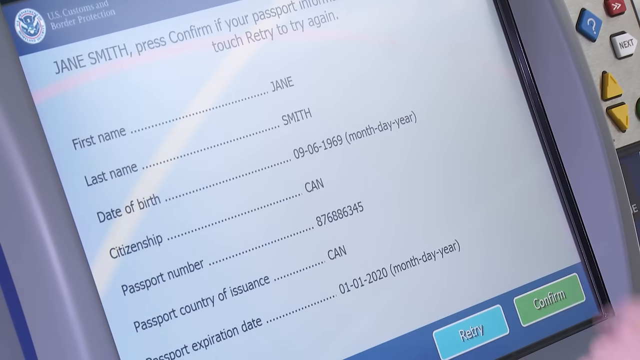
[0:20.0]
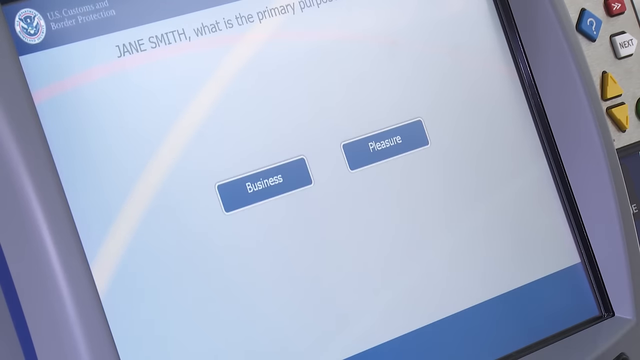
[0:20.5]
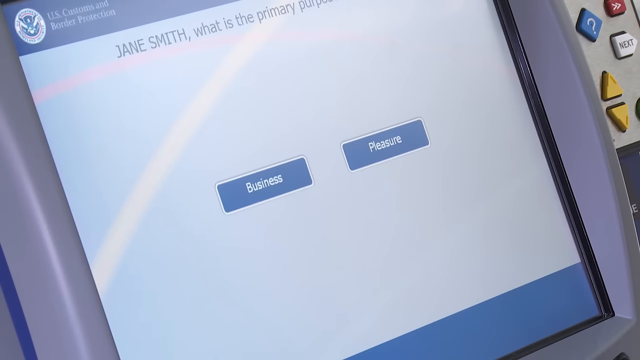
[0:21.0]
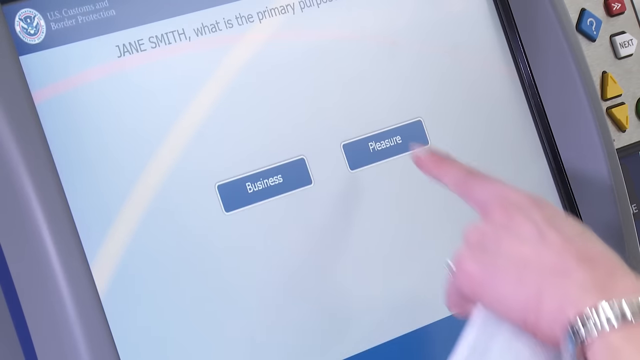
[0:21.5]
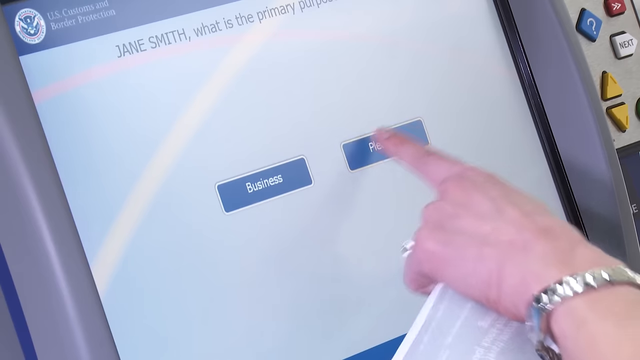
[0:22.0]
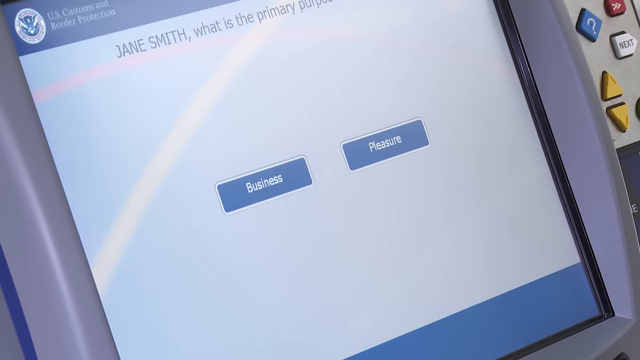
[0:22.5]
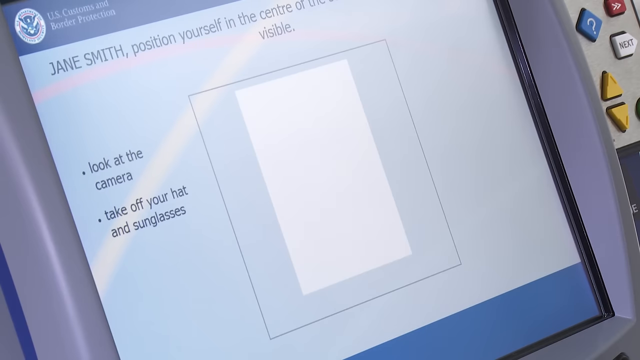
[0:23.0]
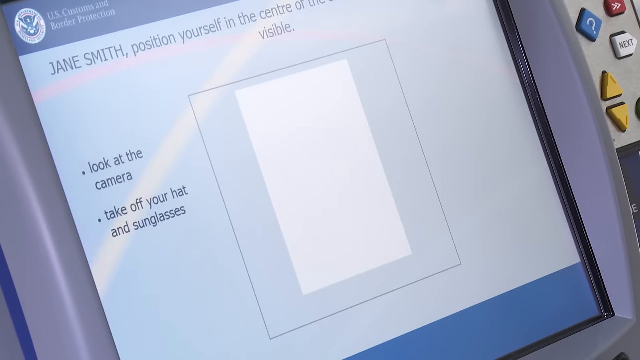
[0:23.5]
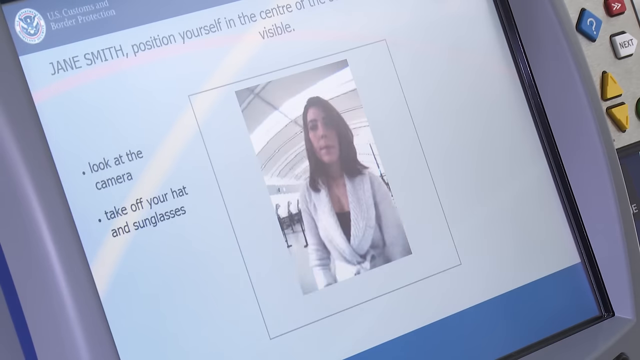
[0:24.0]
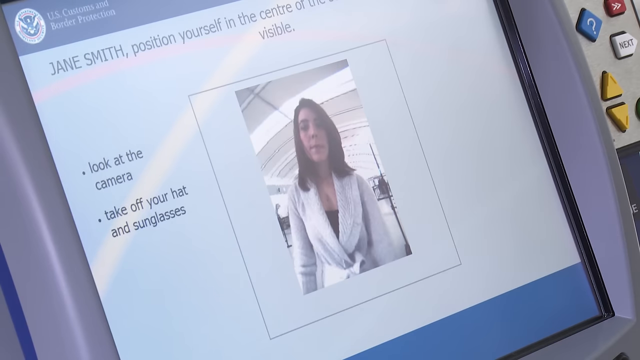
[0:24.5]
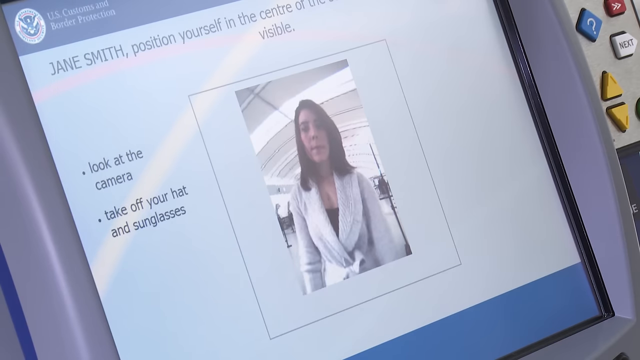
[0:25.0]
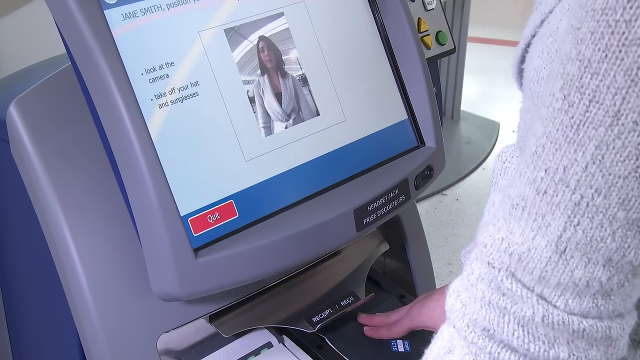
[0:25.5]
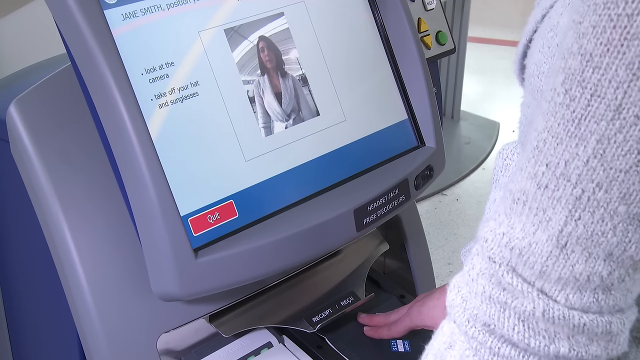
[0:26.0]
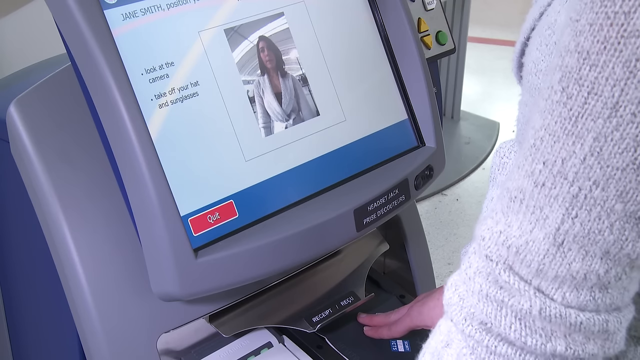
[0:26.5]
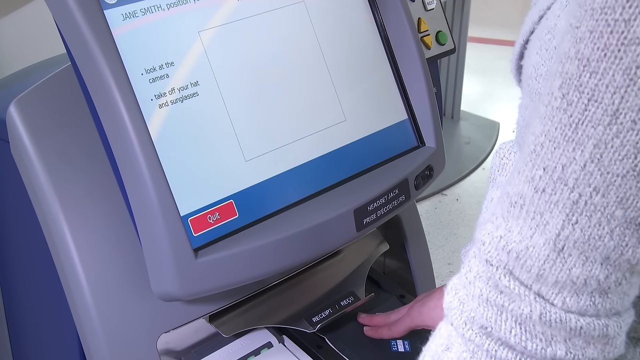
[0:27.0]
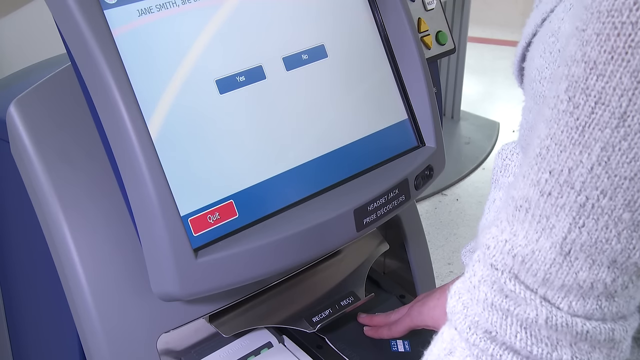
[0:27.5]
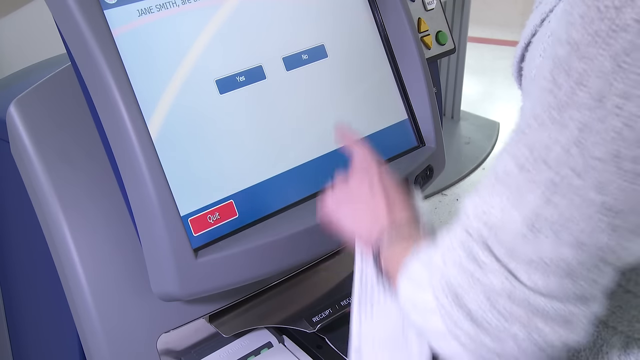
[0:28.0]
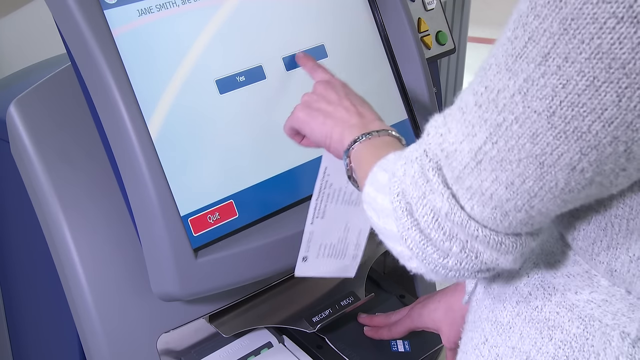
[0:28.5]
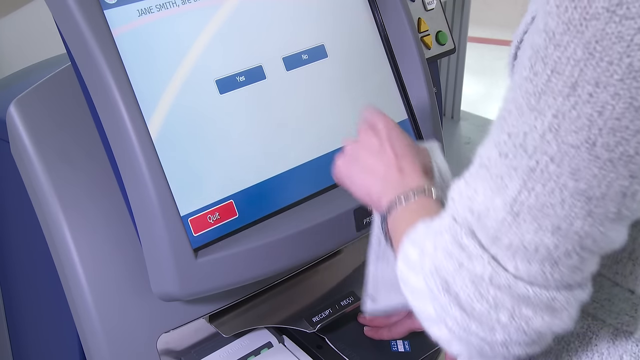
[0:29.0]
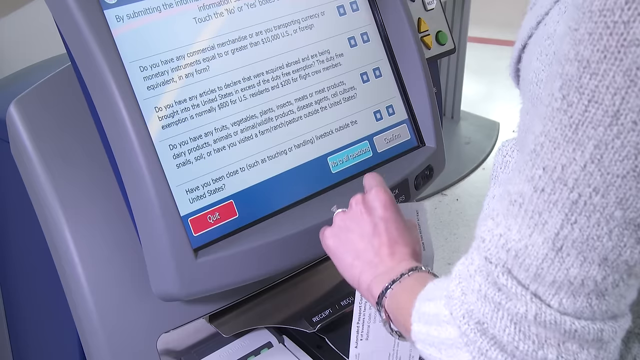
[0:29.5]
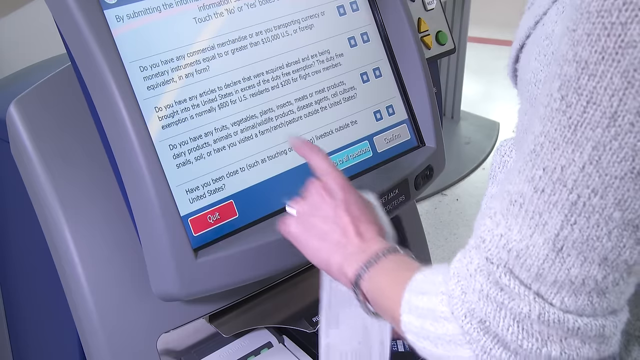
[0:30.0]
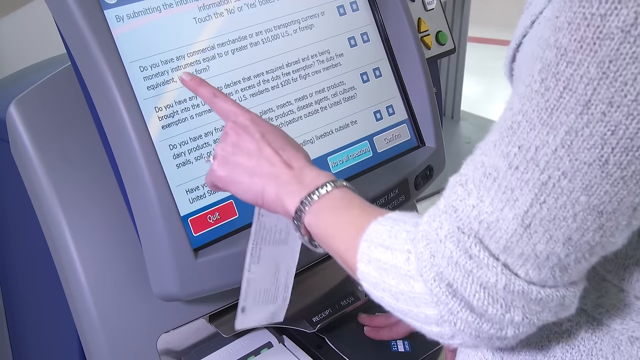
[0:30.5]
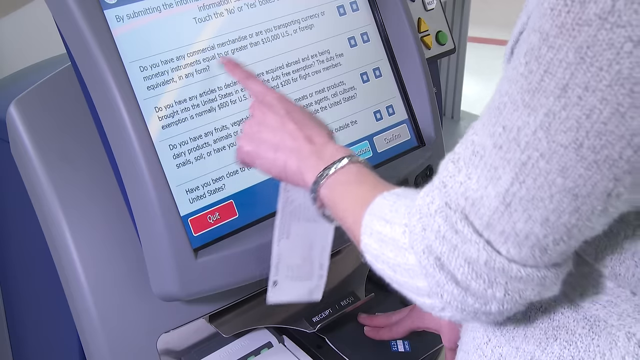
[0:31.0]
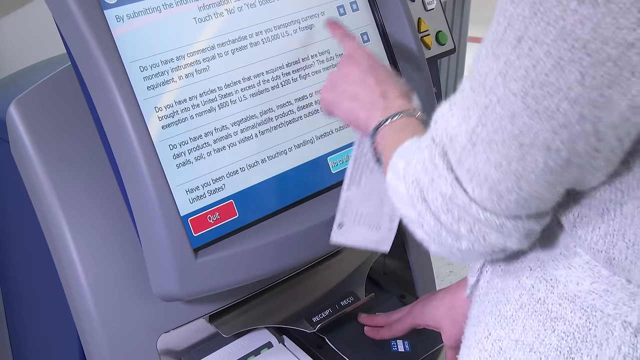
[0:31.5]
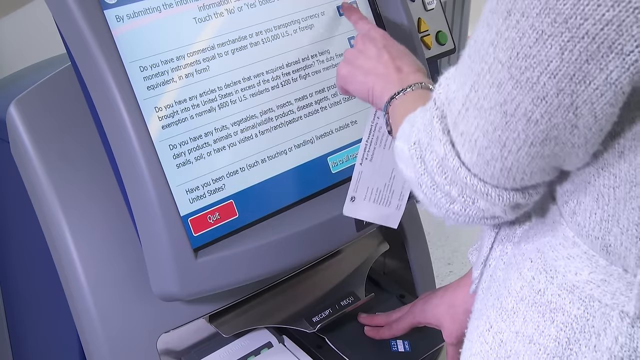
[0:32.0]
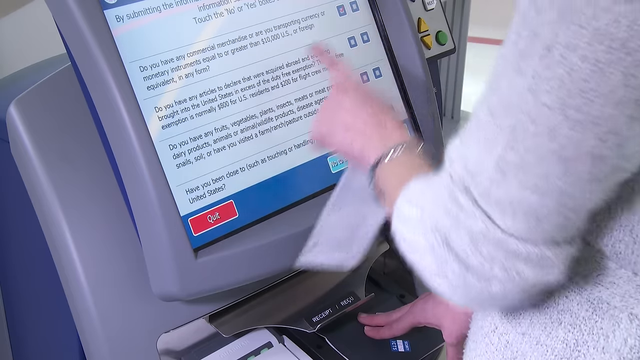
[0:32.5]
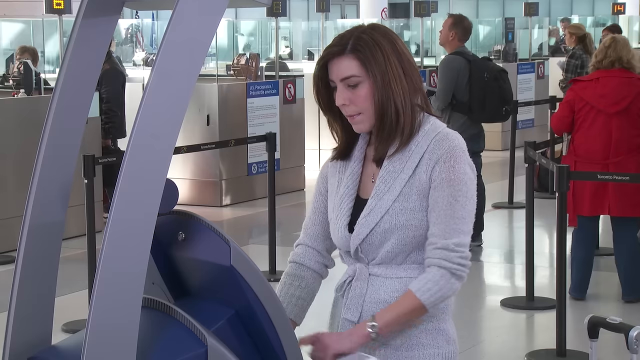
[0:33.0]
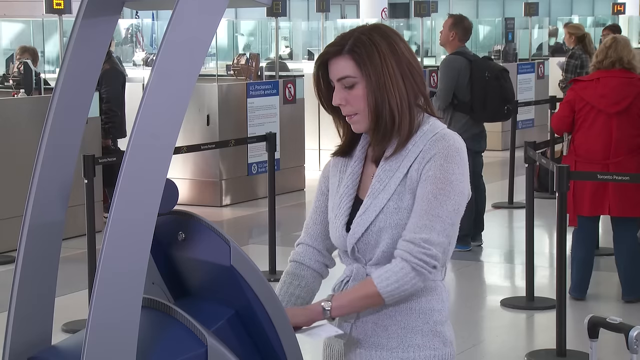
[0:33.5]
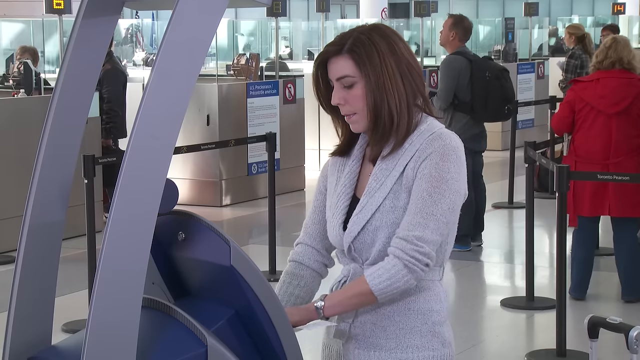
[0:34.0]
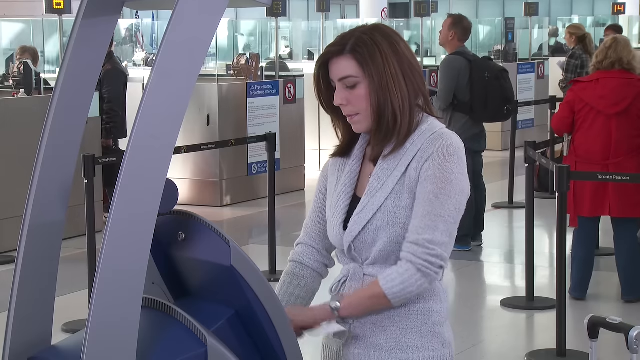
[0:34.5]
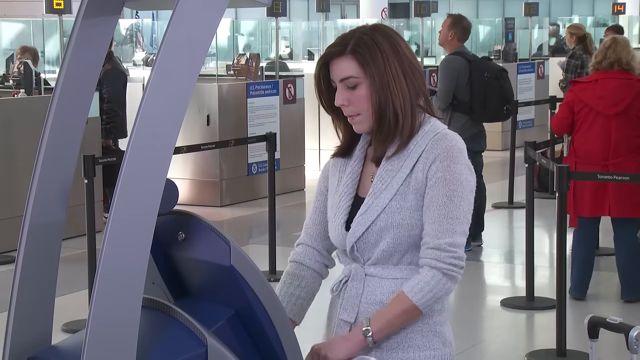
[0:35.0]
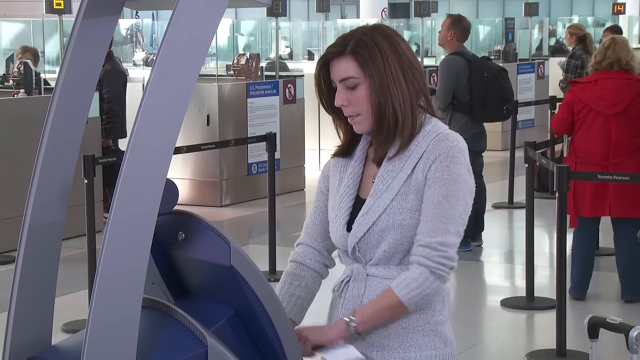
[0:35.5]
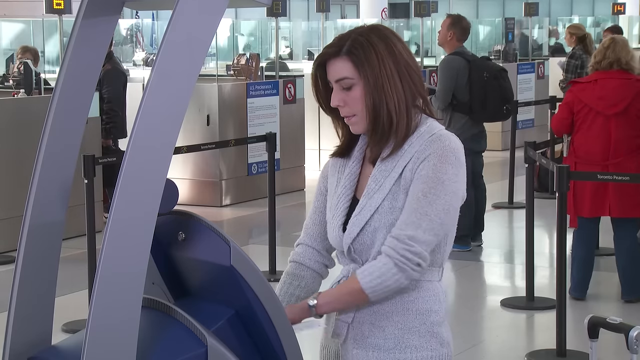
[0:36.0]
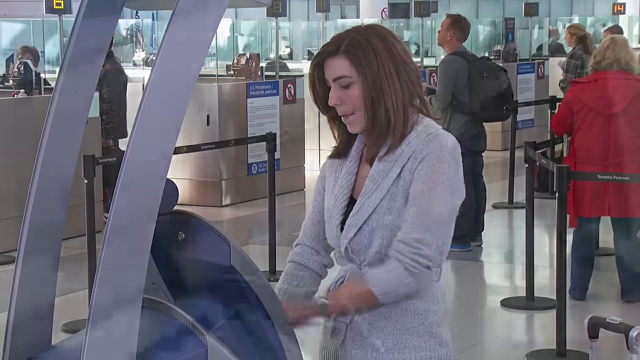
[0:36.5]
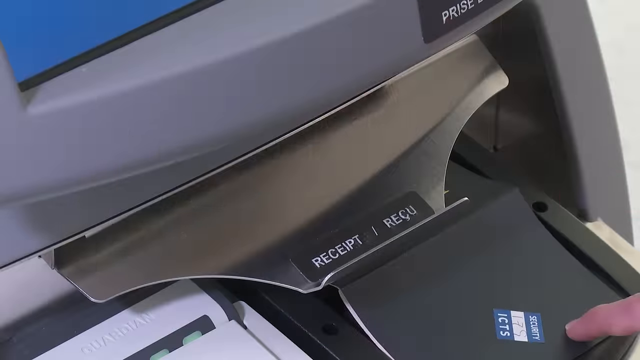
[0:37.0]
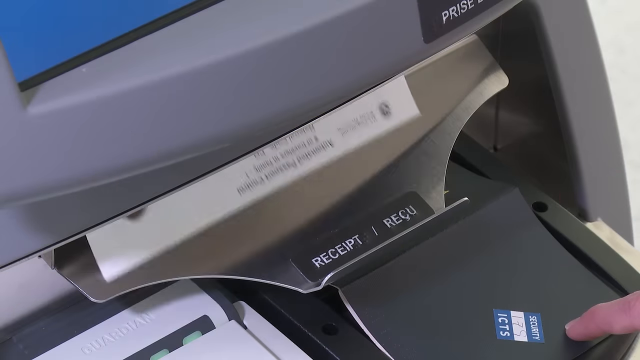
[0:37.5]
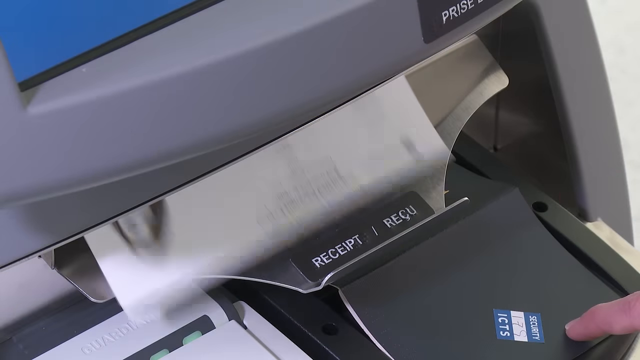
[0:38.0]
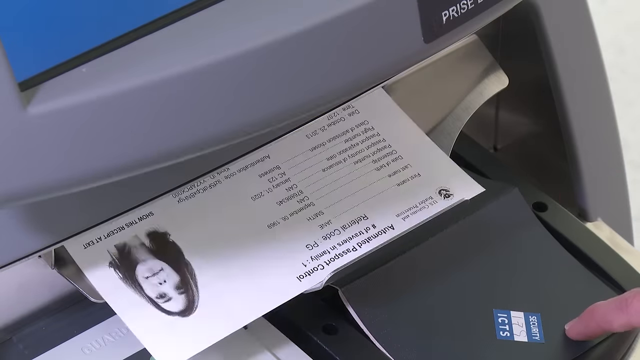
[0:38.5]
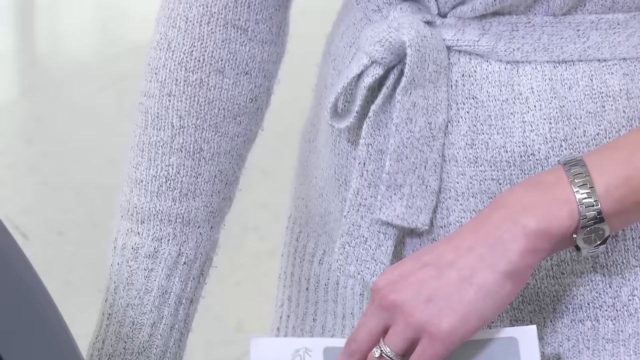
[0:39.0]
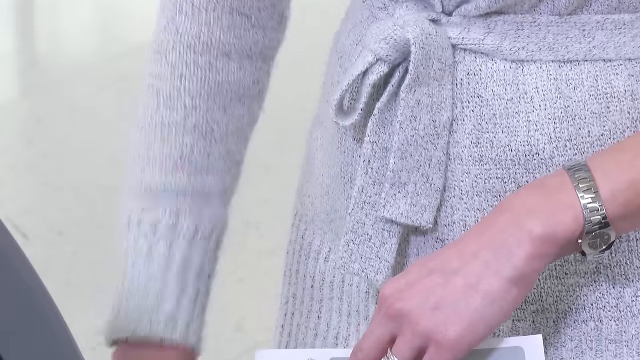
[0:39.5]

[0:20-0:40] The kiosk screen shows her information, and the woman confirms what she is traveling for, either business or pleasure. She works through the different screens on the touch screen, one of which is a camera screen that shows her the frame of the photo so she can line up with it and be photographed. She clicks through different screens and lines of text, at one point using her finger to go over the screen and quickly read it as she presses the buttons. A close-up of the bottom of the screen shows a printer pushing out some sort of form, which has the photo she took of herself and some printed information on it. A close-up of her hands shows the tie of her cardigan tied at her waist as she picks up the slip of paper from the printer.